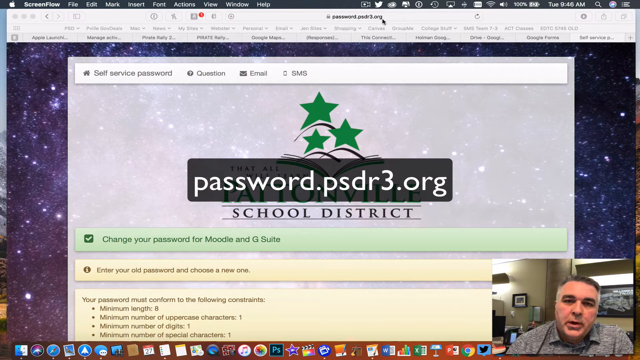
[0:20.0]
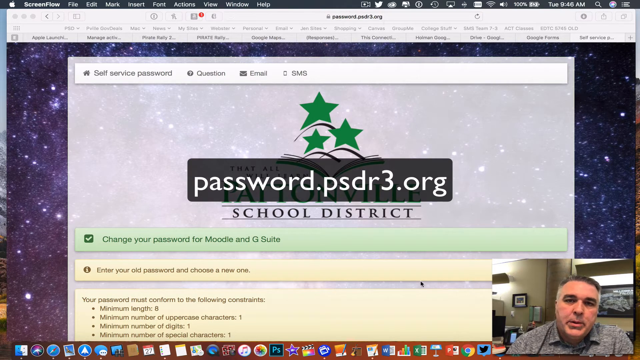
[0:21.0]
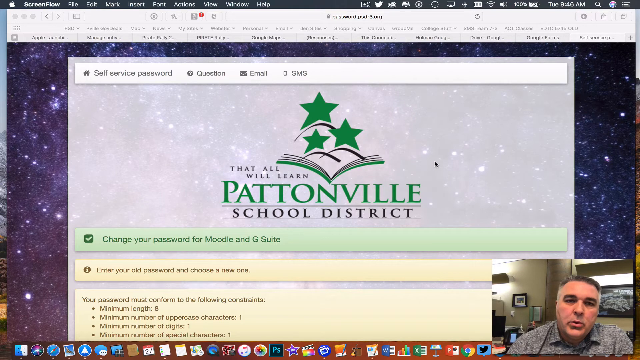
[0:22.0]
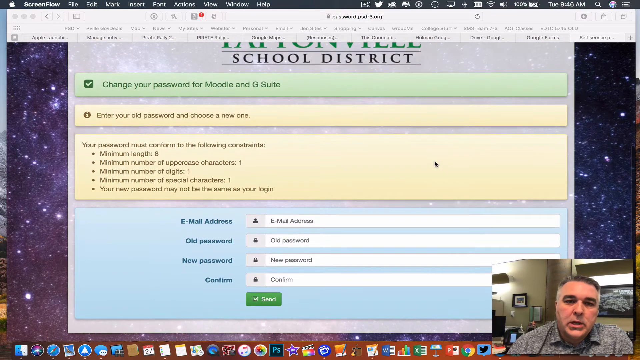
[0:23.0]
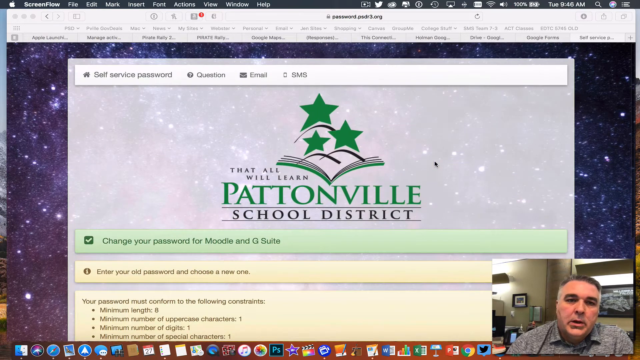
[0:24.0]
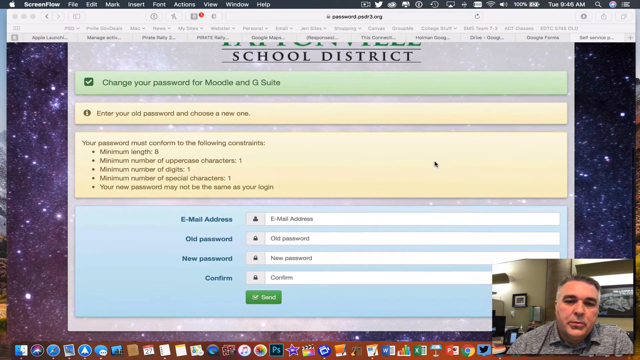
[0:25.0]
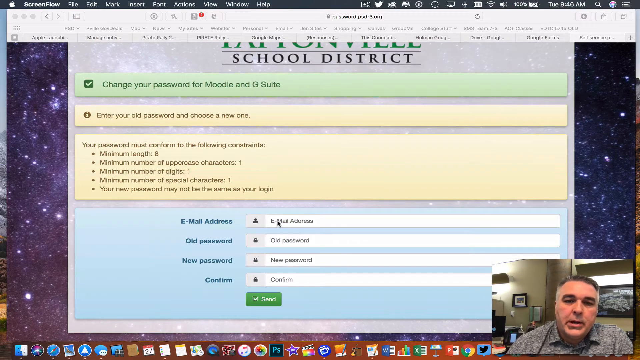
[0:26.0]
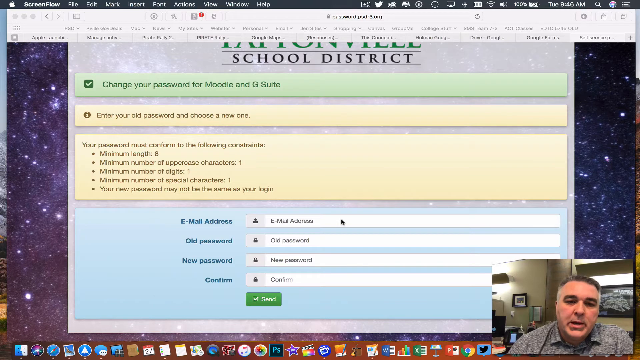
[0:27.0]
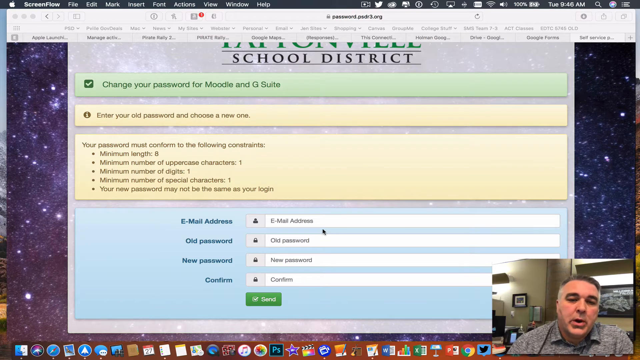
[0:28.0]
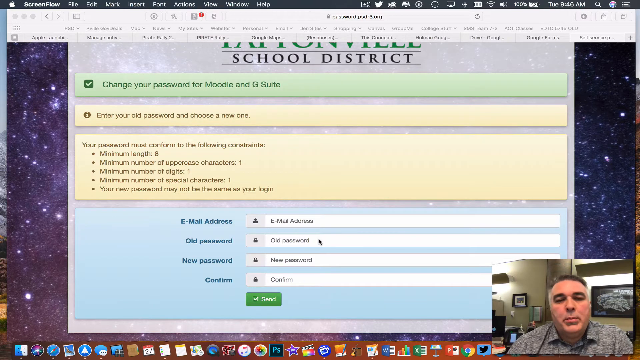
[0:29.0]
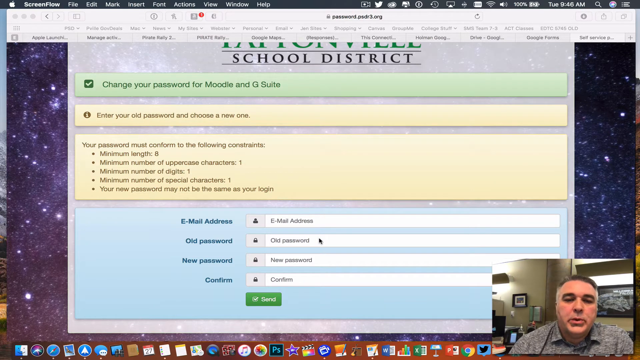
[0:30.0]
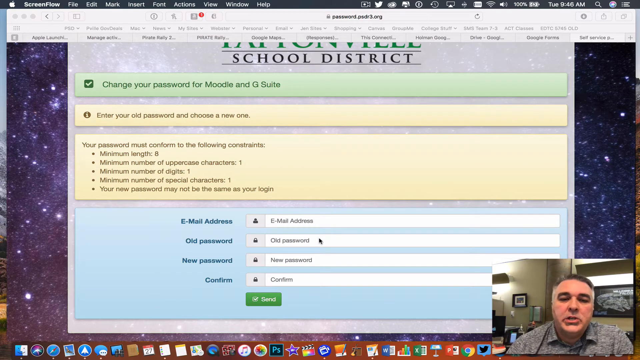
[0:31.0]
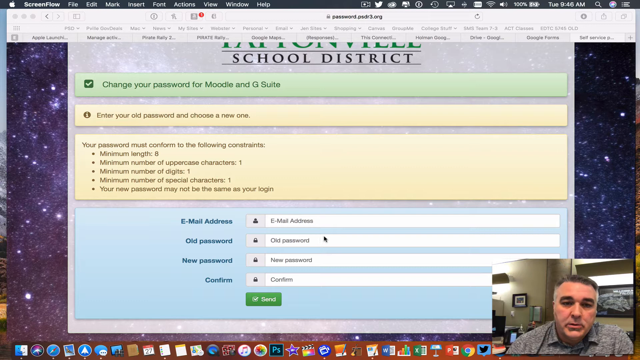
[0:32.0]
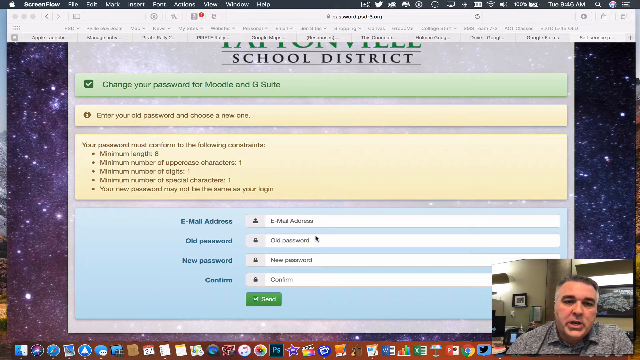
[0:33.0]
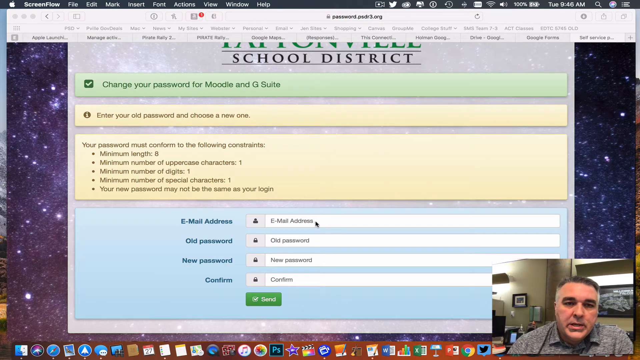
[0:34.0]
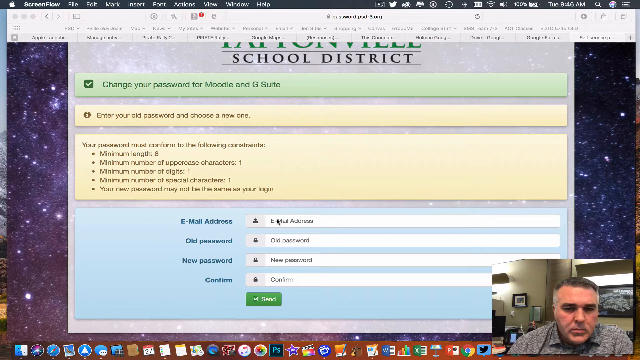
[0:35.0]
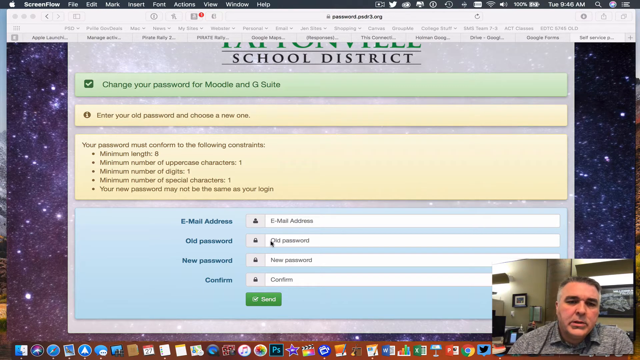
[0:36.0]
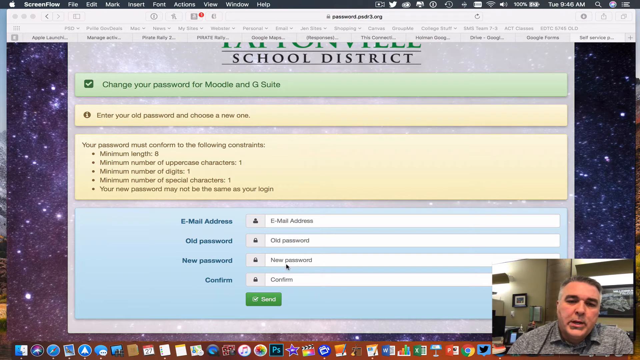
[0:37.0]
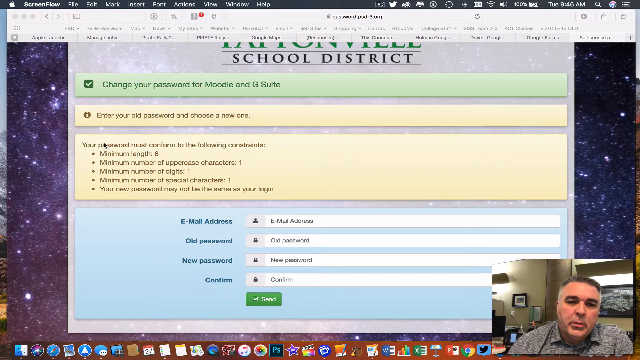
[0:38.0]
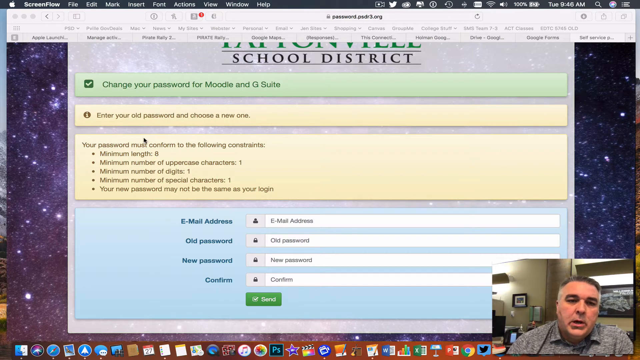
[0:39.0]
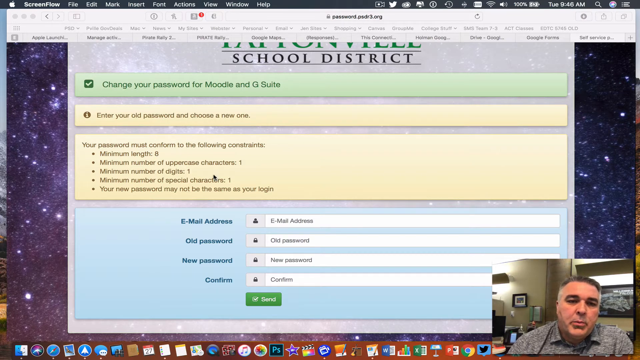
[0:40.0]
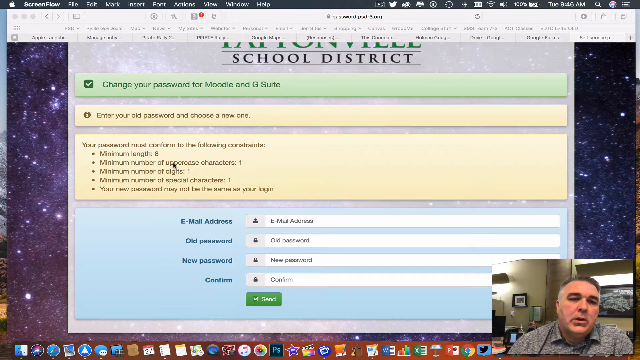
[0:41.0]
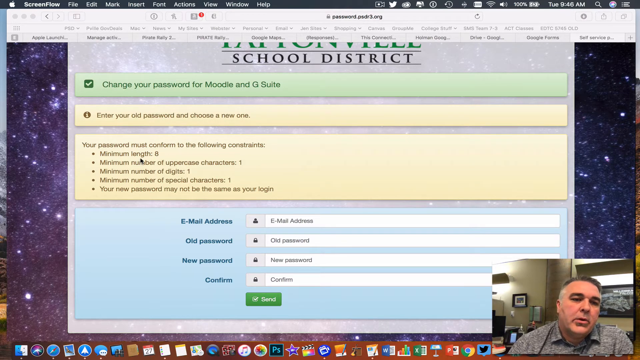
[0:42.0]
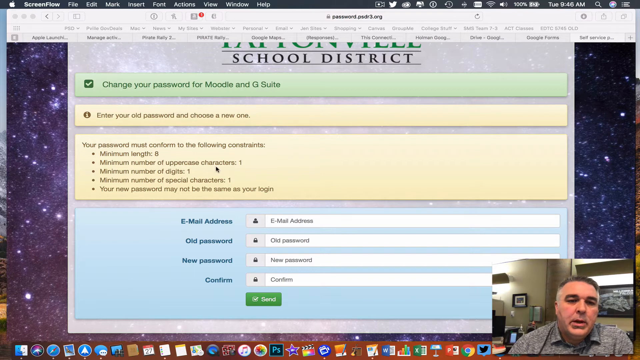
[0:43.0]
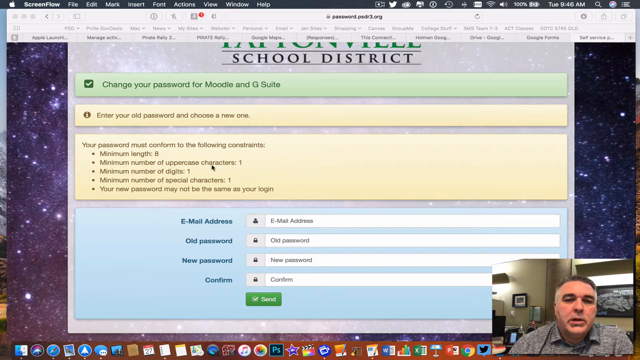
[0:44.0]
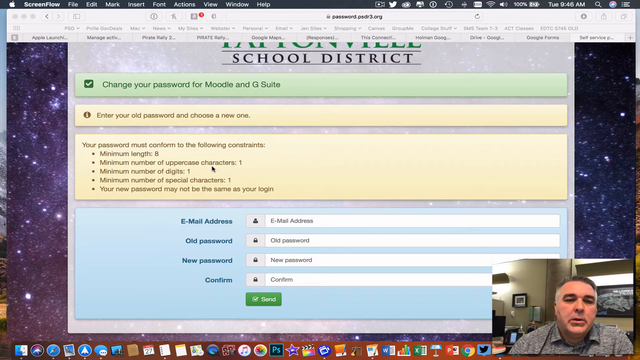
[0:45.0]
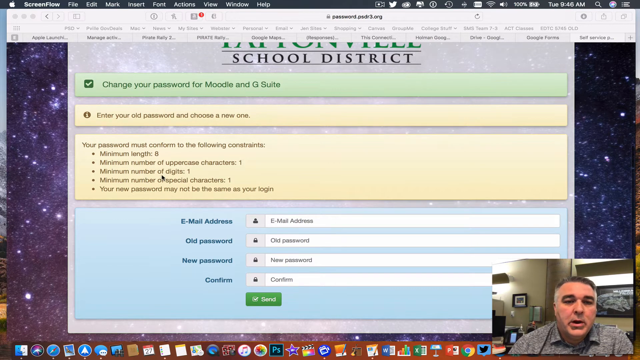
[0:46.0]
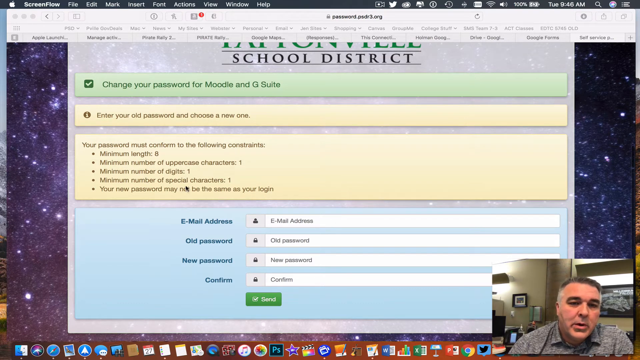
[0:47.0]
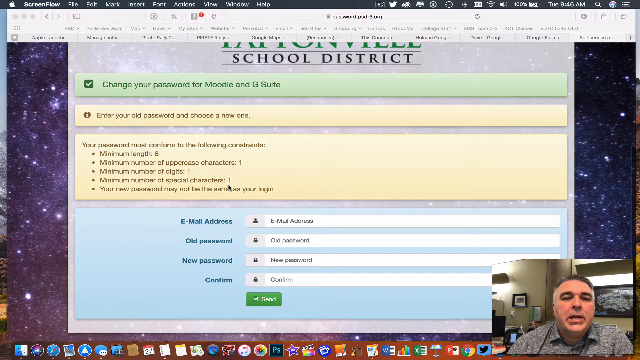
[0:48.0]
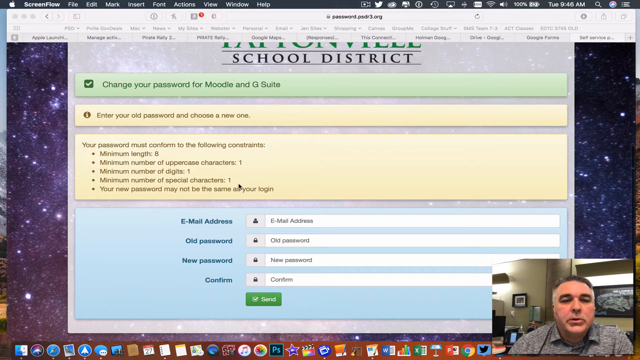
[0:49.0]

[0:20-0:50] "password.psdr3.org" appears in white font on a black rectangle, with the three stars above it. The man scrolls down, back up, and down again. At the bottom of the page there is a white background, then a blue background with white type-in areas for email address, old password, new password and confirm, followed by a green rectangular box and a white button with a check mark on its left side that says "save." The man talks and sometimes moves his head from side to side. He circles the cursor around the password constraints, such as having at least one uppercase character and being at least eight characters long.